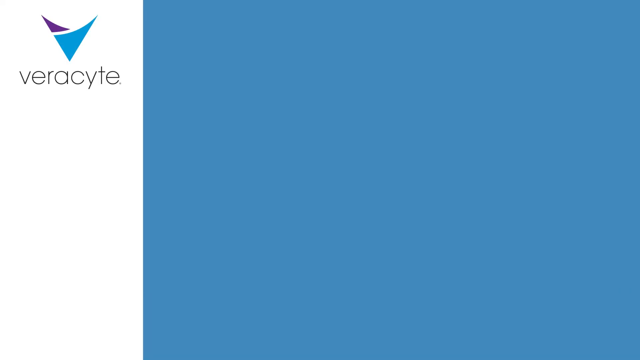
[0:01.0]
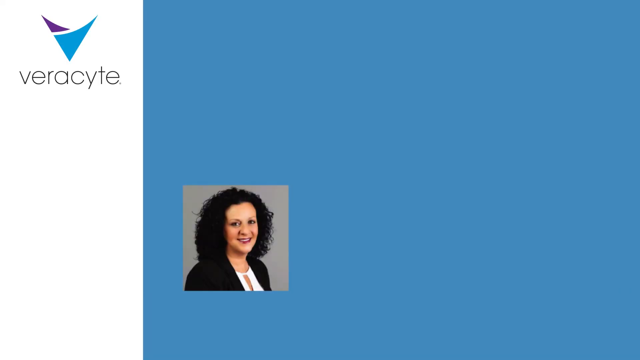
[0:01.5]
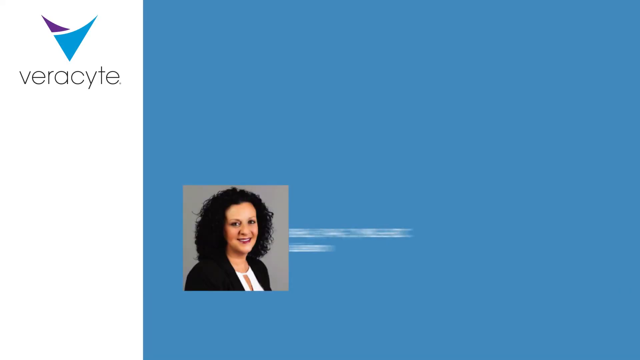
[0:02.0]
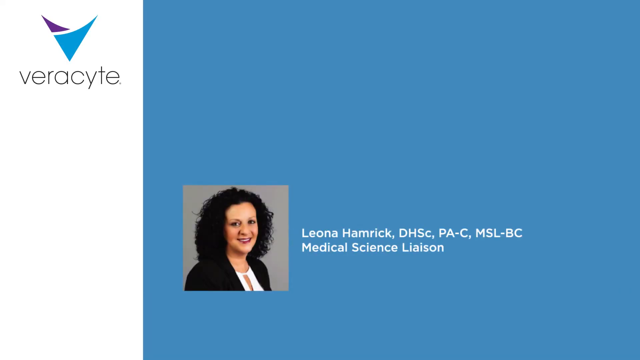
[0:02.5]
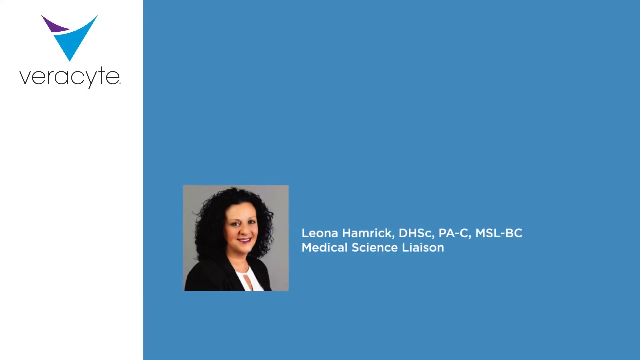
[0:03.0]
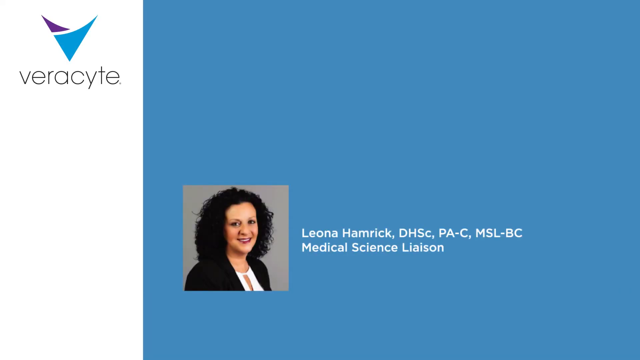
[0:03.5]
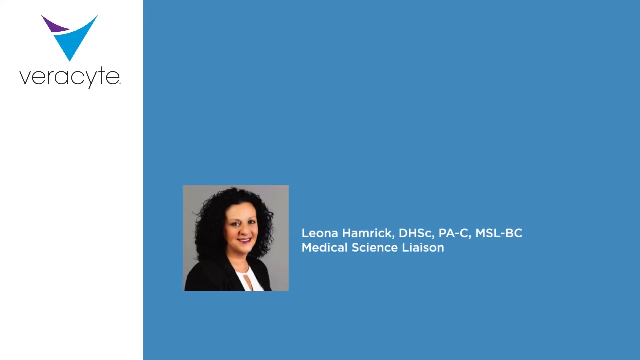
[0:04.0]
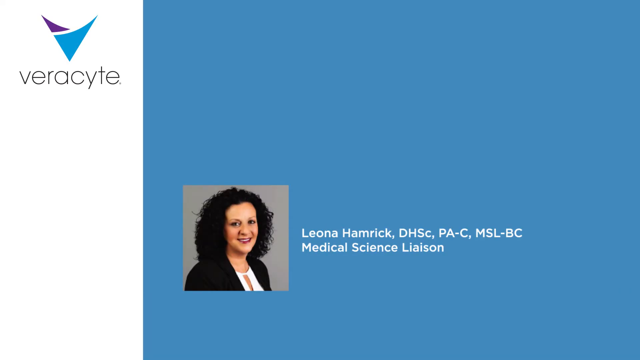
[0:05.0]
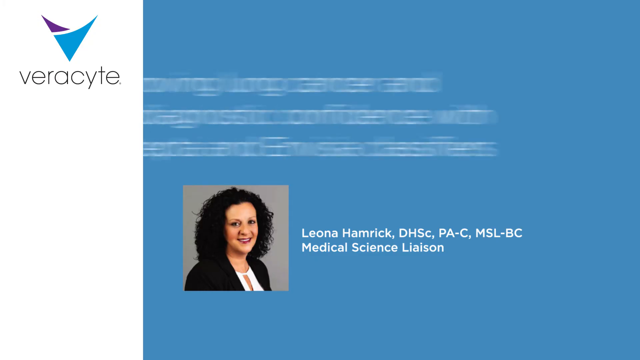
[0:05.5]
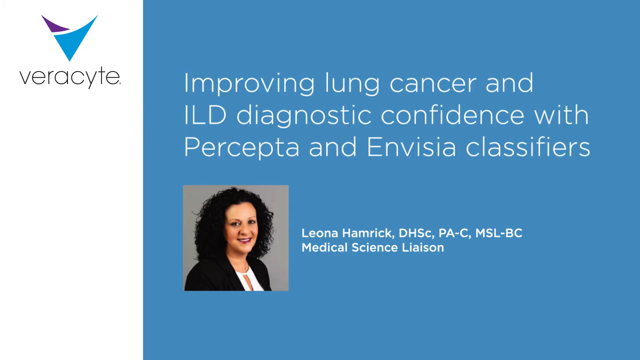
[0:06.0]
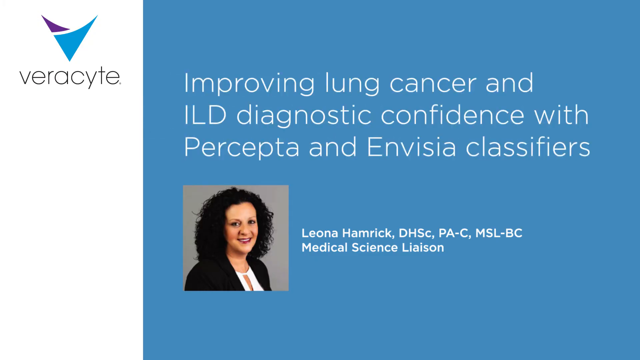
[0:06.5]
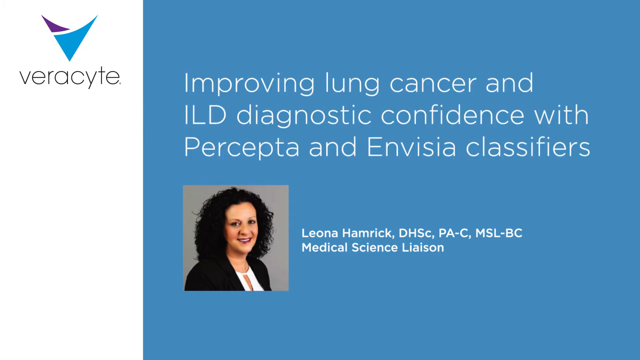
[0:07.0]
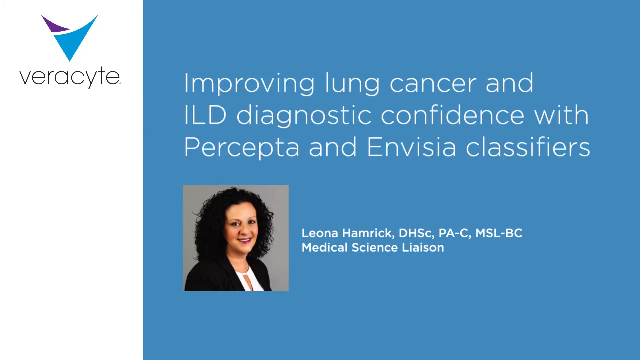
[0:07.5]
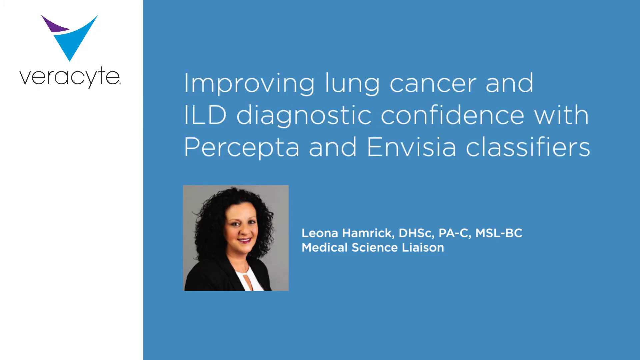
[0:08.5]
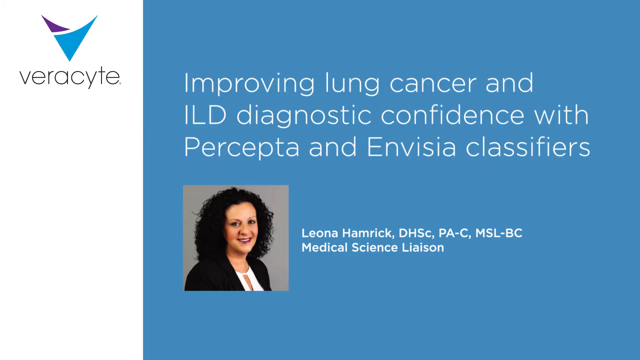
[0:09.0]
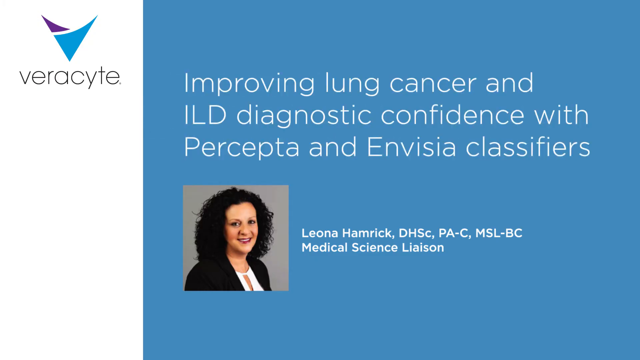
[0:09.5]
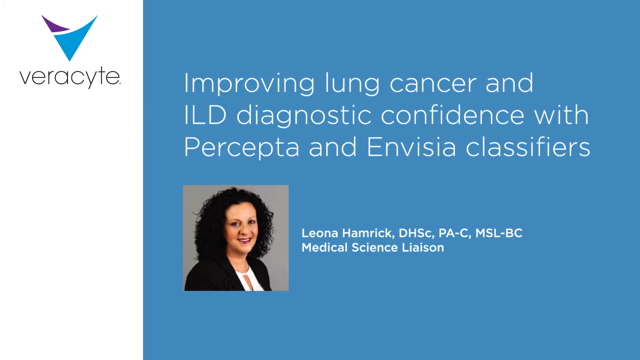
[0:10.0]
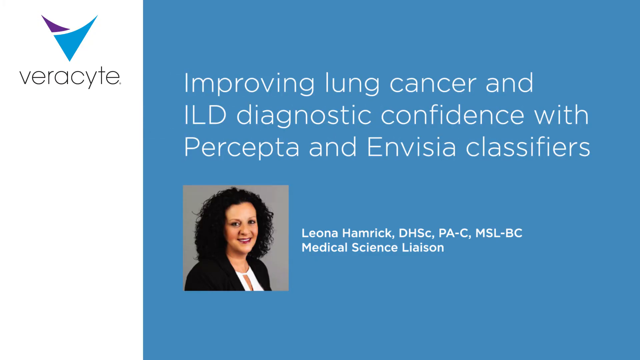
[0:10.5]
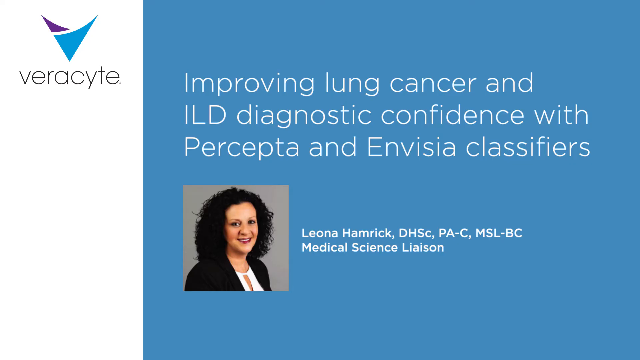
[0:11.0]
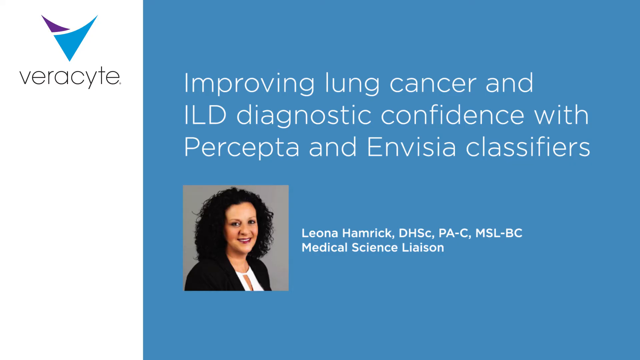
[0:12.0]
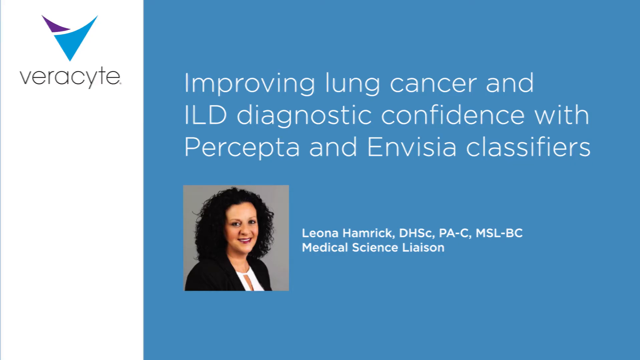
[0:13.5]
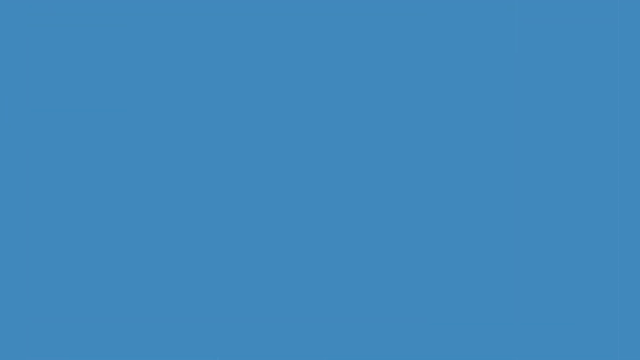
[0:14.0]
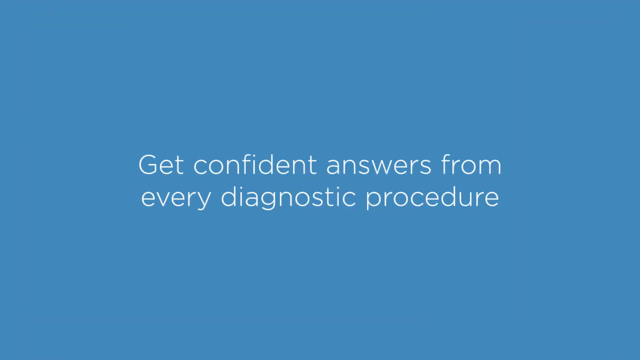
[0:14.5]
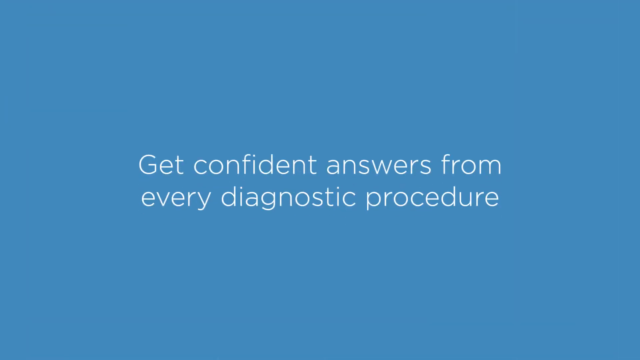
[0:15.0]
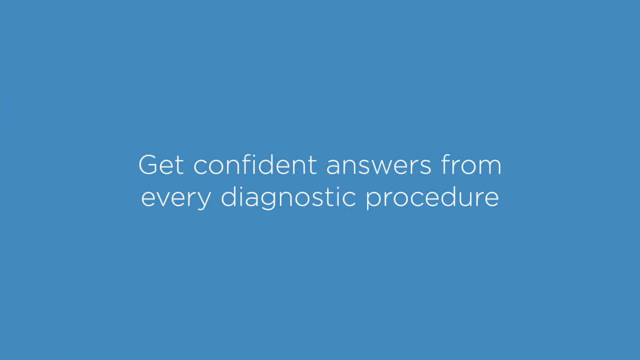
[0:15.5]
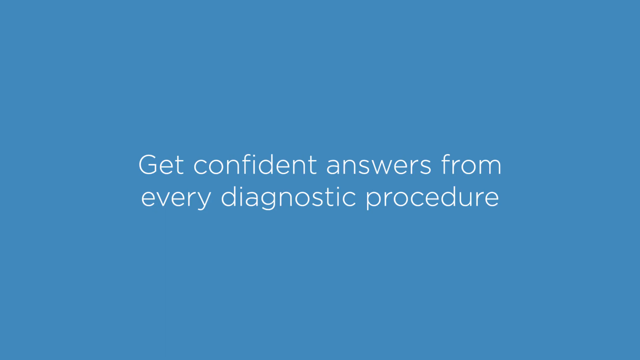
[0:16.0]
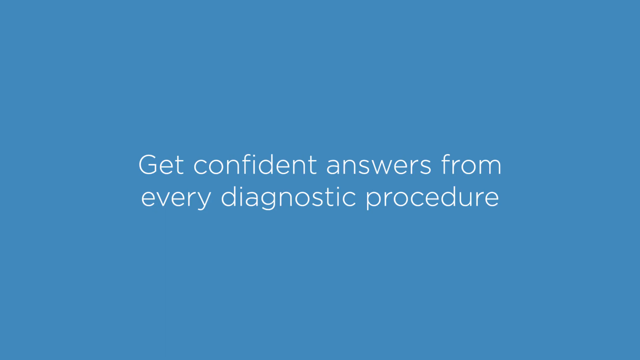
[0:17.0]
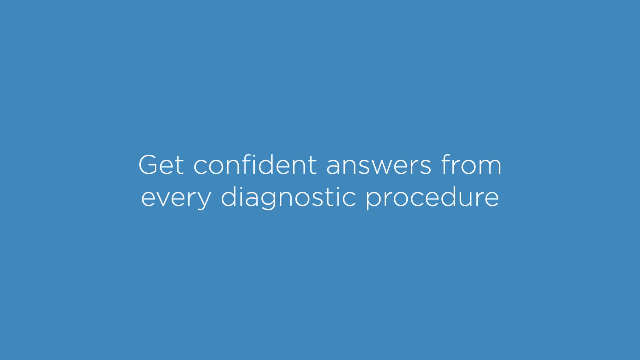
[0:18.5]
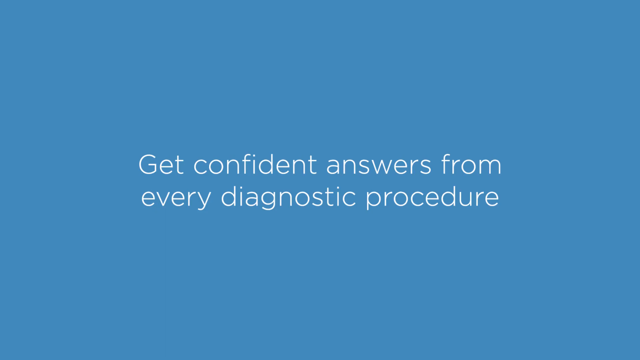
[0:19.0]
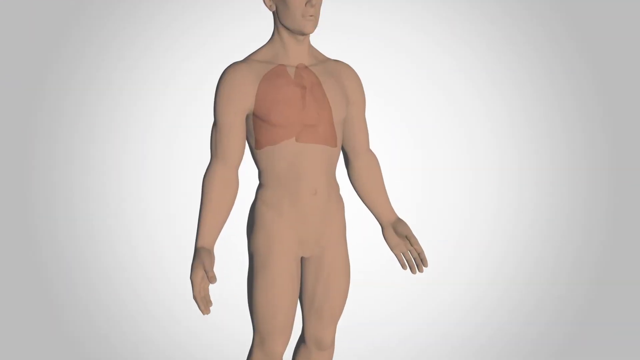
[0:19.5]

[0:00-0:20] The video opens on a blue screen with a small white section on the left-hand side. In the white part is a logo made of two triangles, one blue and one black, with the company name, Veracyte, beneath it. On the right-hand side, in the blue area at the lower left-hand corner, is a portrait of a woman with olive skin and shoulder-length black curly hair. She wears a black jacket and a white shirt, faces the camera in three-quarter profile, and smiles. Beside her the text reads "Leona Hamrick, DHSC, PA-C, MSL-BC, Medical Science Liaison." A subtitle then pops up: "Improving Lung Cancer and ILD Diagnostic Confidence with Percepta and Invisia Classifiers." The screen then changes to white text on the blue background reading "Get confident answers from every diagnostic procedure." Next comes an illustration of a plain, tan human form with the lungs visible inside it, highlighted in pink.